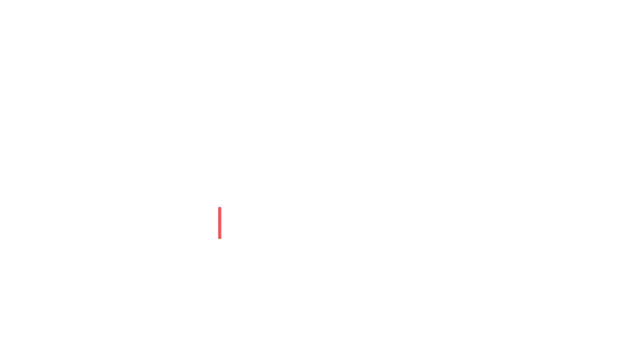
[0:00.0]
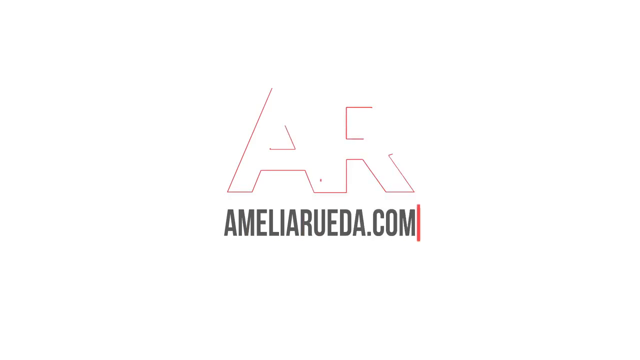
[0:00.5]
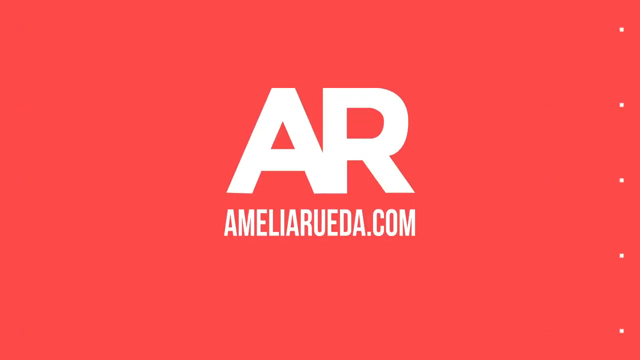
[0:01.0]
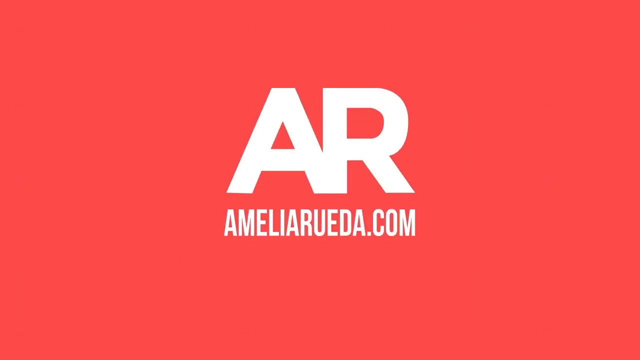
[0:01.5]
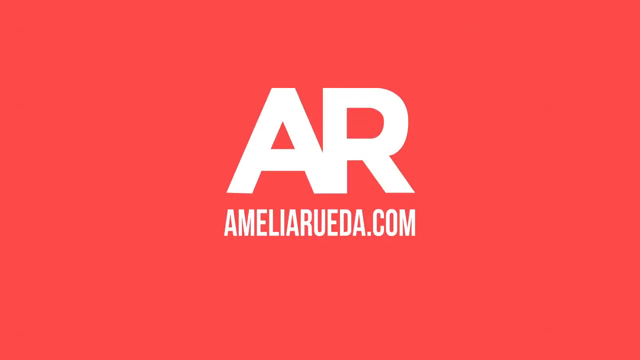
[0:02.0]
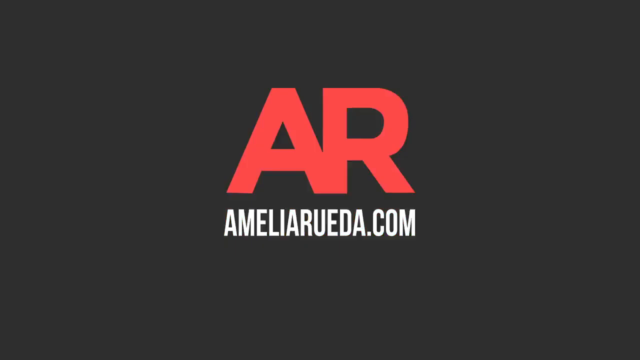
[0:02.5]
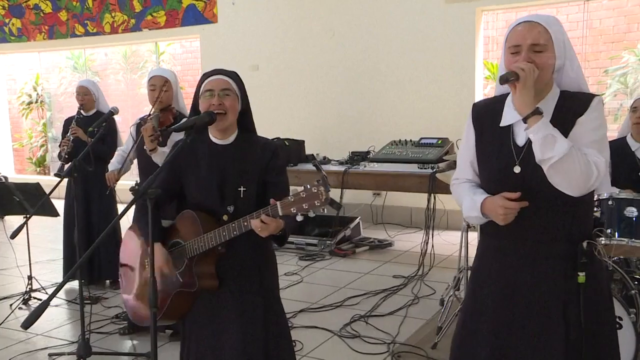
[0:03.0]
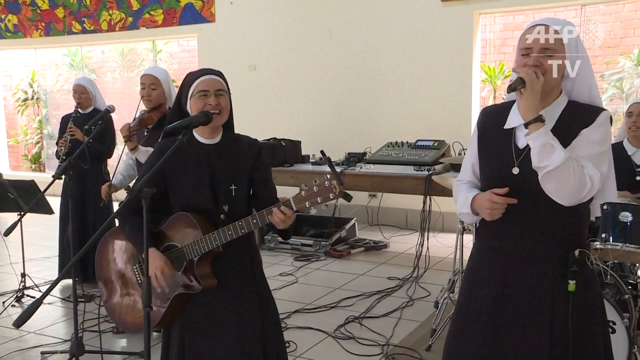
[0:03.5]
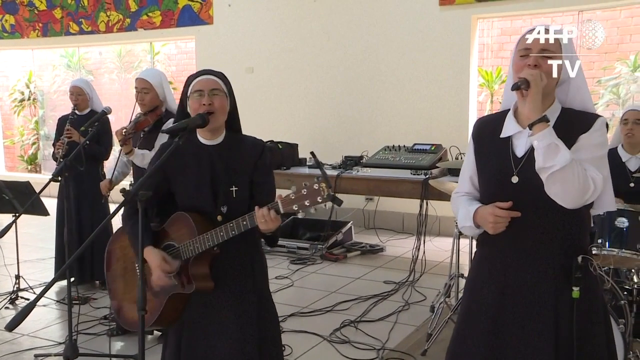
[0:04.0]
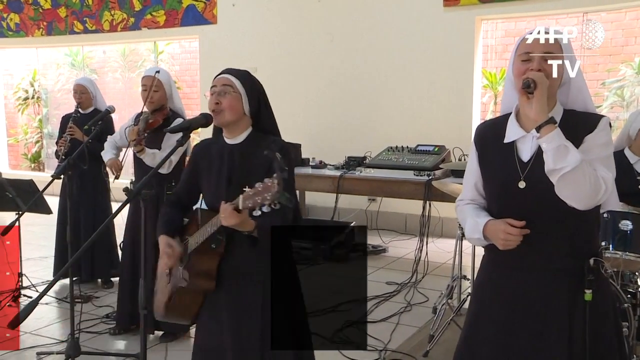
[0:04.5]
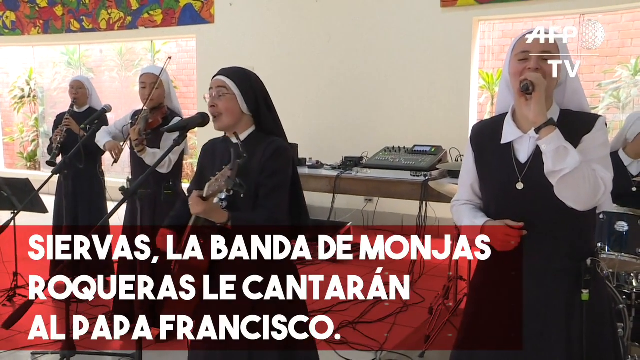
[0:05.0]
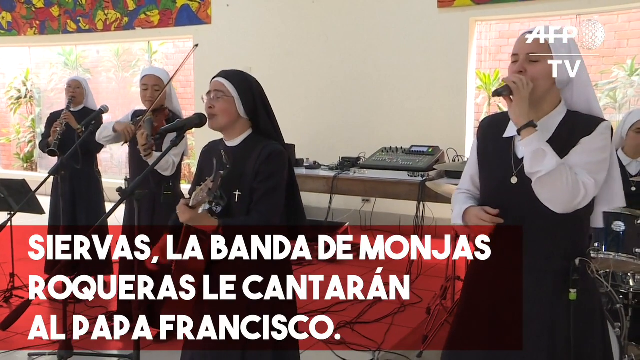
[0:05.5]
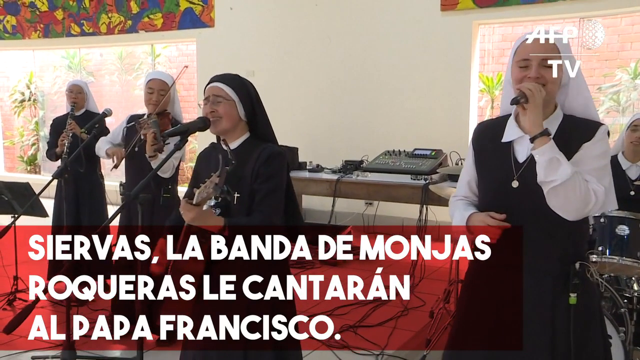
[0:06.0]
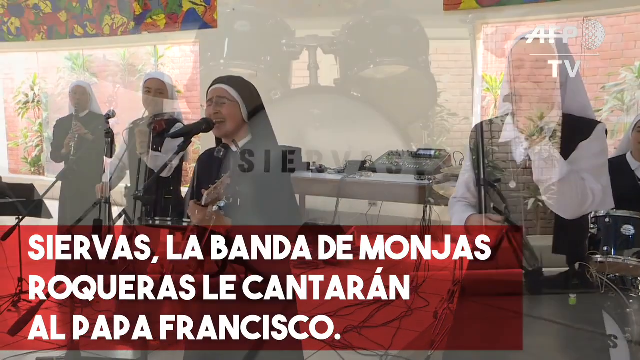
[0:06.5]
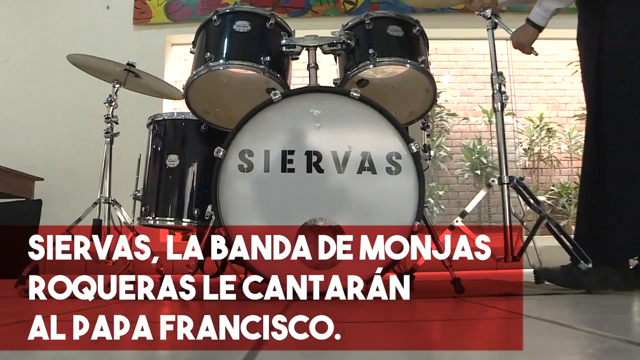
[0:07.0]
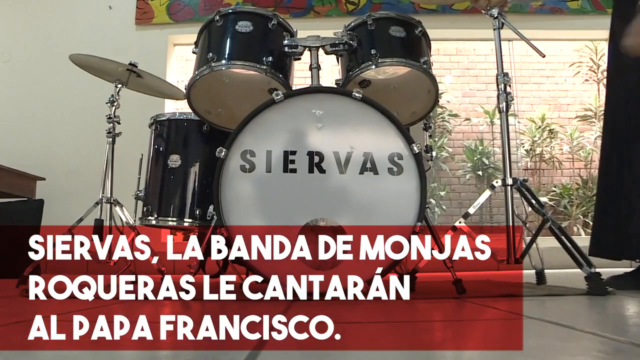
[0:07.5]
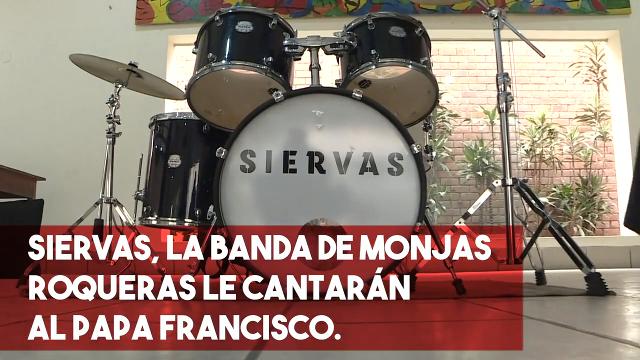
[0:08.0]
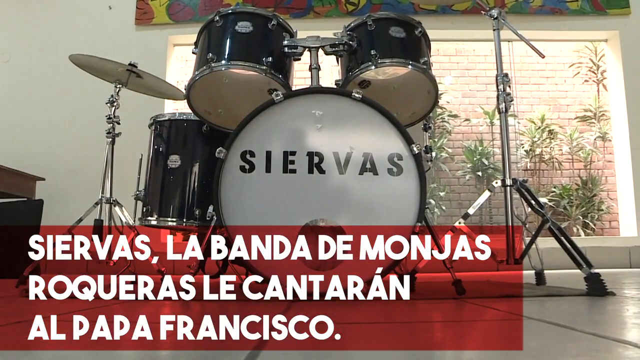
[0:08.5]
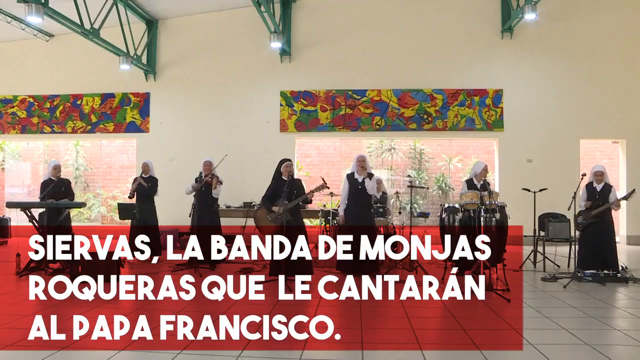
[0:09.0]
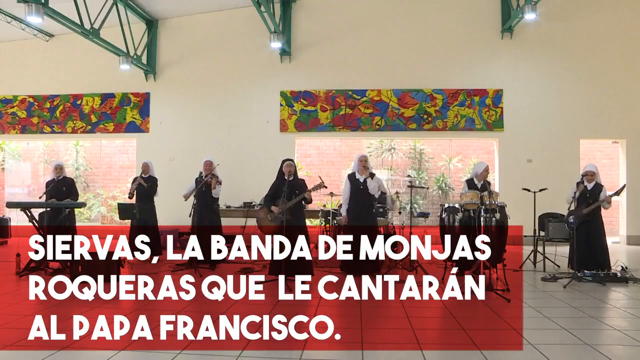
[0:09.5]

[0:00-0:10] A white background turns red. Five horizontal rows of red dots are arranged with nine vertical columns of white dots in the background. The letters A and R appear in white text, with "ameliarueda.com" in white text beneath them. The white dots in the background disappear, and the background turns black before the view zooms in. Five nuns stand on a stage. On the left, two nuns play a woodwind instrument and a violin. To their right, in the foreground, a smiling nun with glasses plays a guitar; to her right, a nun holds a microphone up to her mouth with her left hand; and to her right, in the background, a nun plays the drums. "AFP TV" appears in white text in the upper right corner. As the nuns play, a red text box in the lower left corner reads "Siervas, La Banda De Monjas Roqueras Le Cantaran Al Para Francisco." A close-up shows the nuns' drum set, with a nun on the right whose hand, white shirt and black skirt are visible; "Siervas" is written in black text on the front of the drum set. Next, seven nuns stand on stage in front of a white wall.